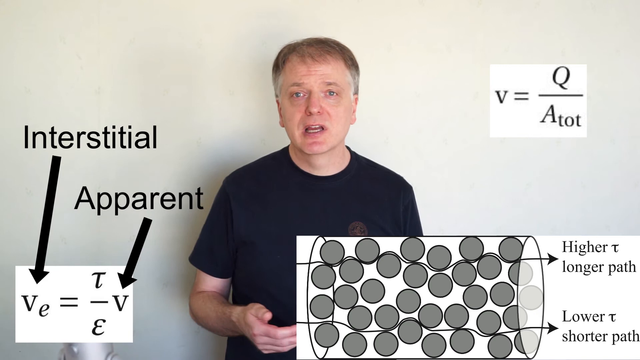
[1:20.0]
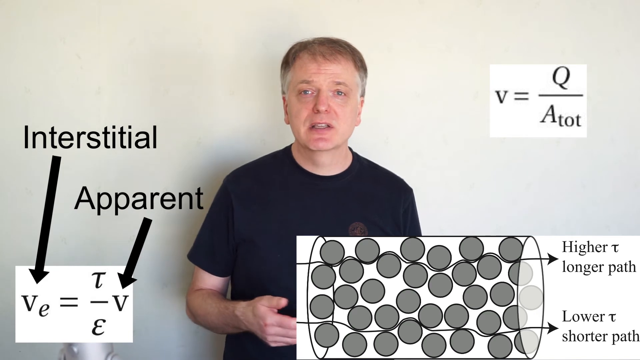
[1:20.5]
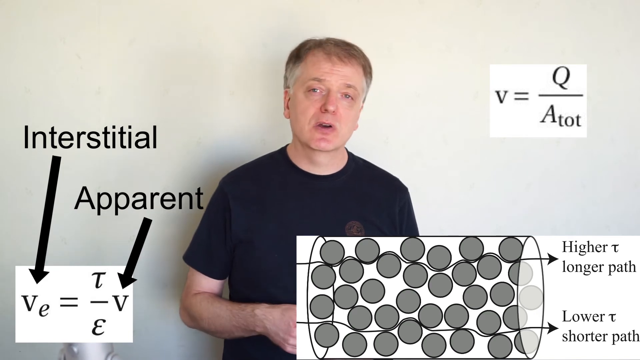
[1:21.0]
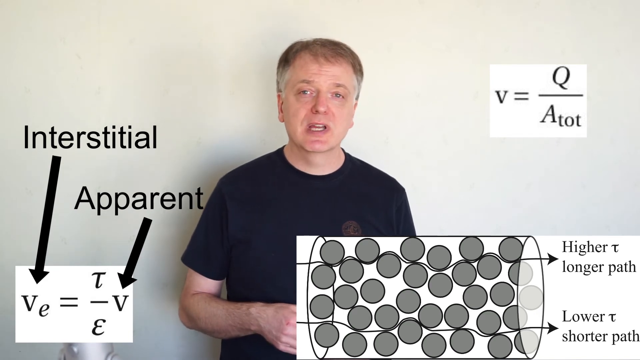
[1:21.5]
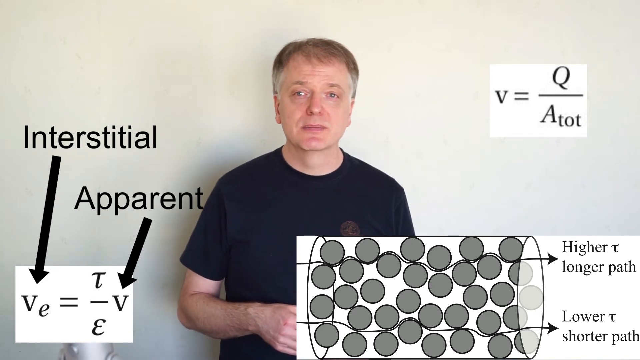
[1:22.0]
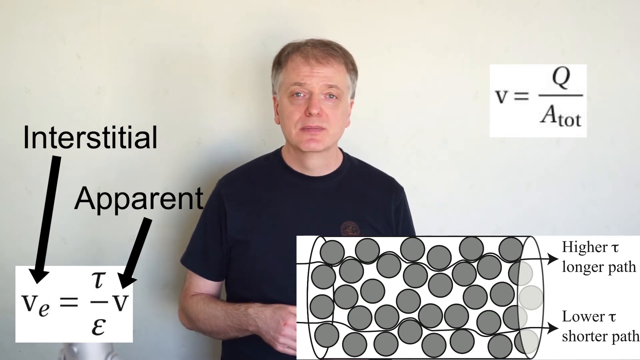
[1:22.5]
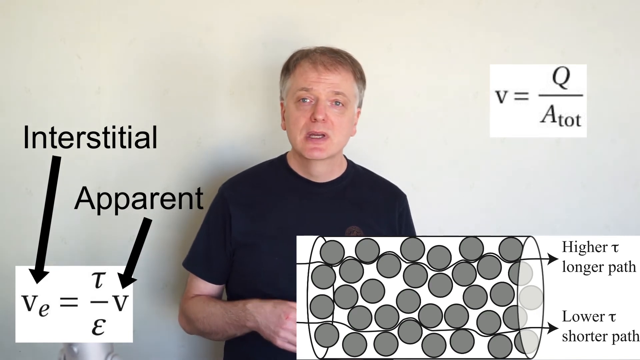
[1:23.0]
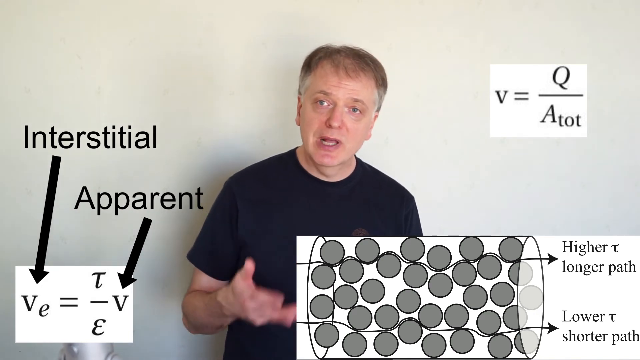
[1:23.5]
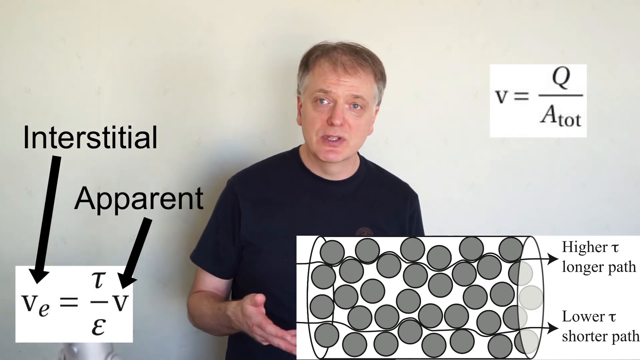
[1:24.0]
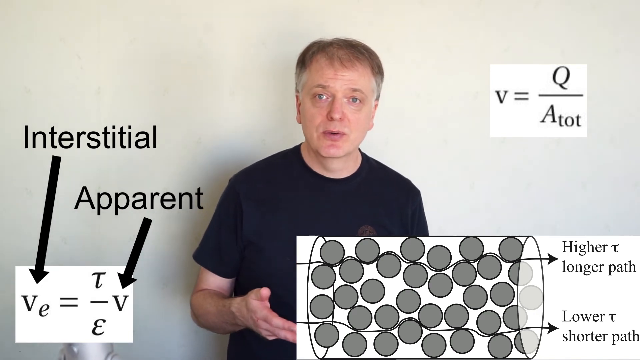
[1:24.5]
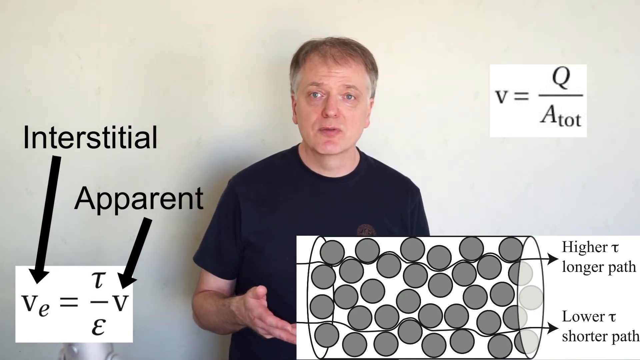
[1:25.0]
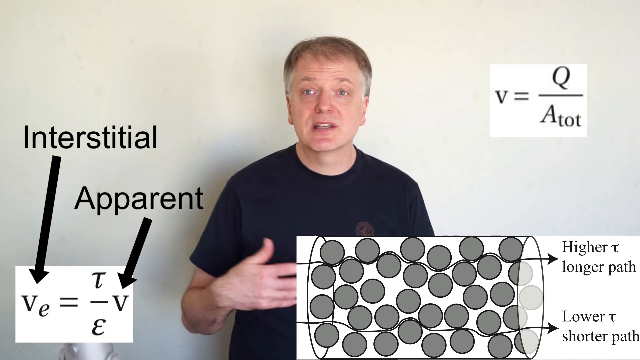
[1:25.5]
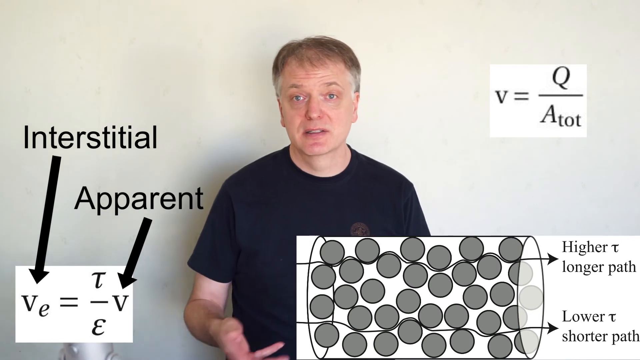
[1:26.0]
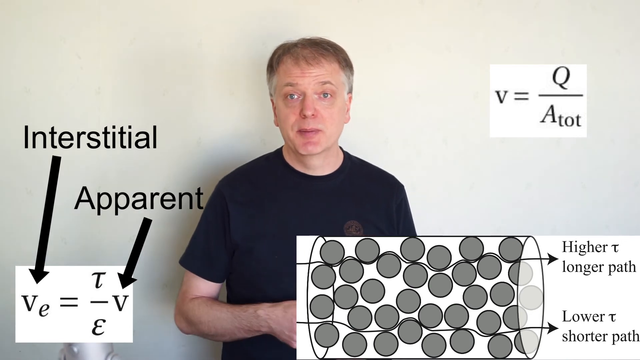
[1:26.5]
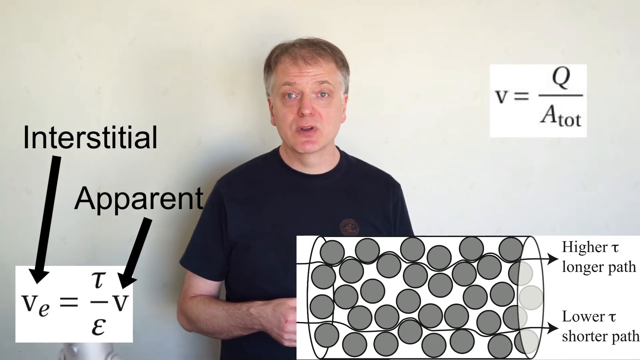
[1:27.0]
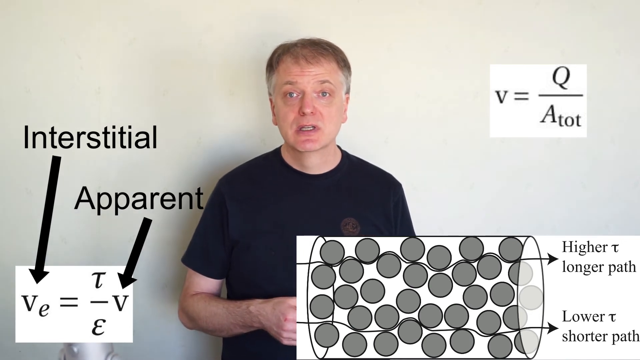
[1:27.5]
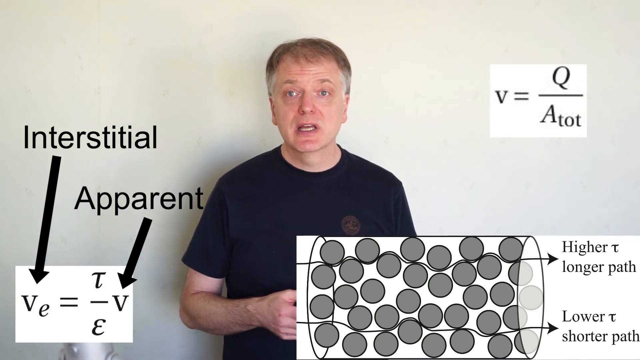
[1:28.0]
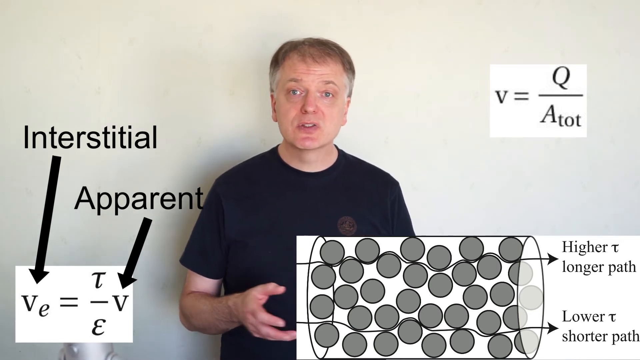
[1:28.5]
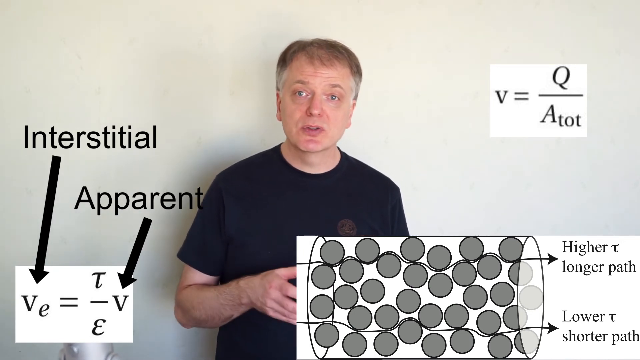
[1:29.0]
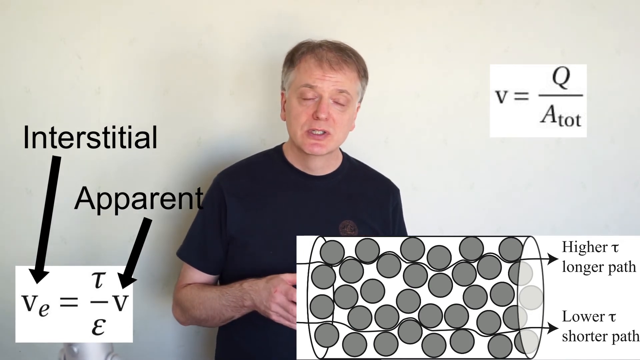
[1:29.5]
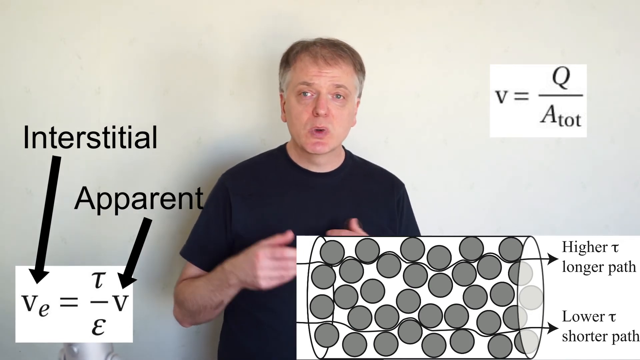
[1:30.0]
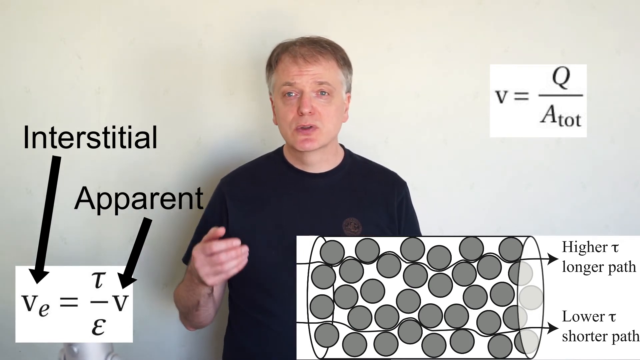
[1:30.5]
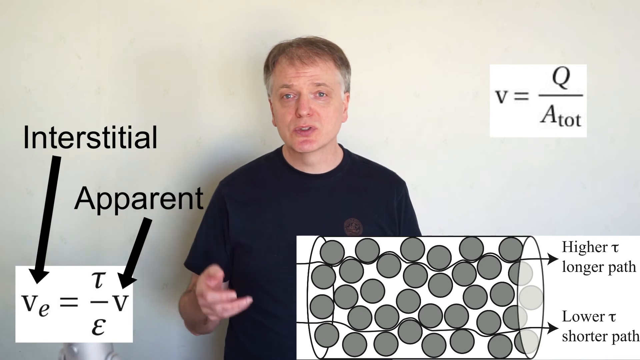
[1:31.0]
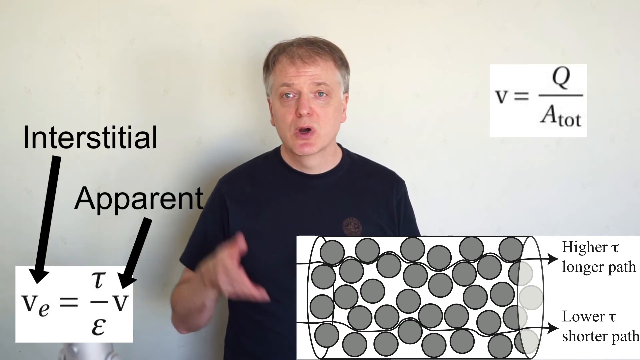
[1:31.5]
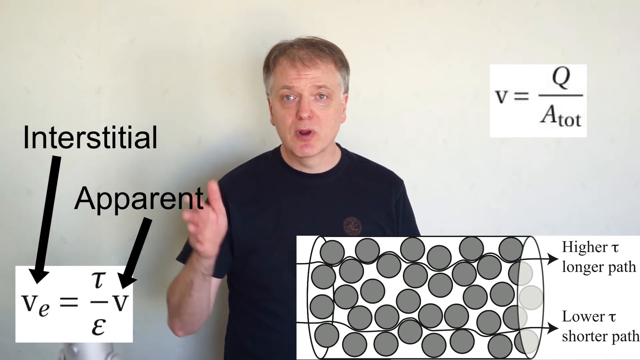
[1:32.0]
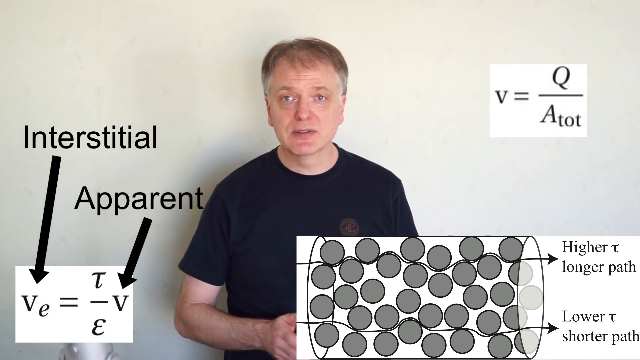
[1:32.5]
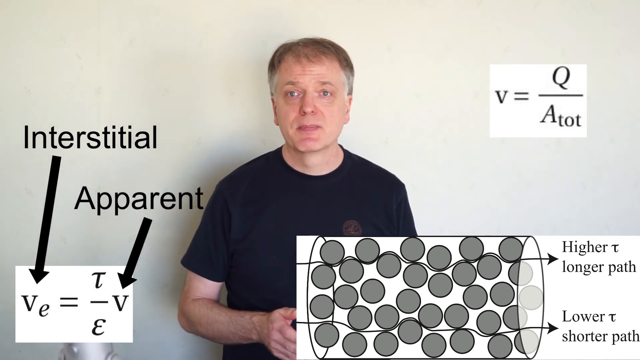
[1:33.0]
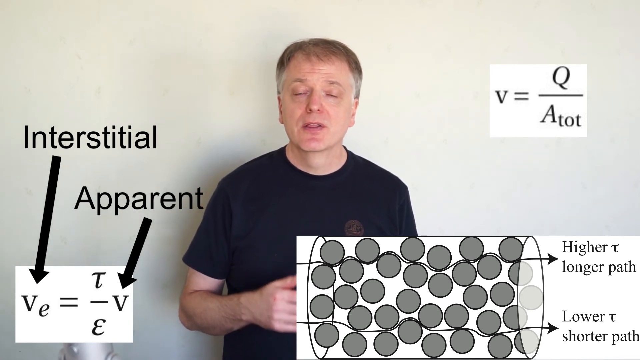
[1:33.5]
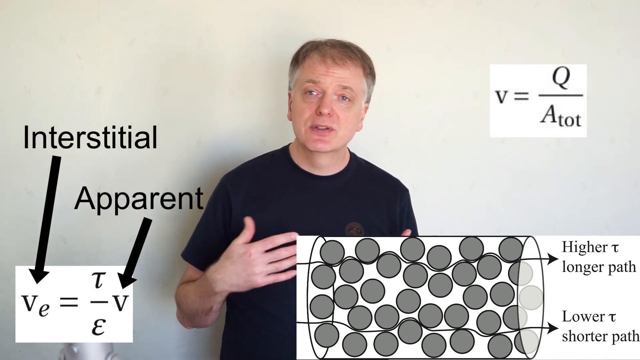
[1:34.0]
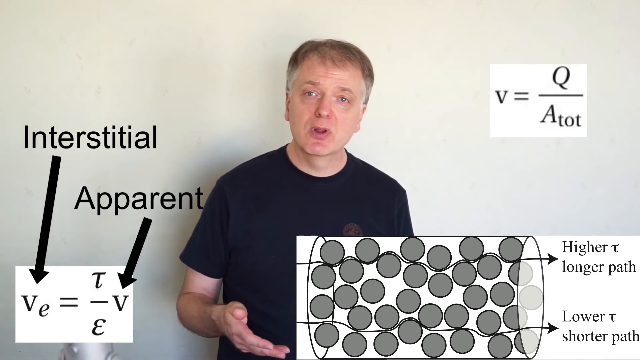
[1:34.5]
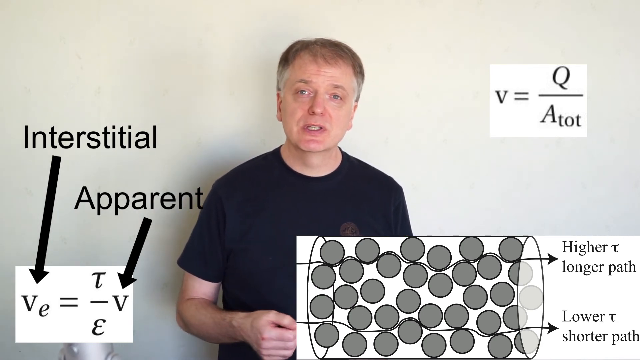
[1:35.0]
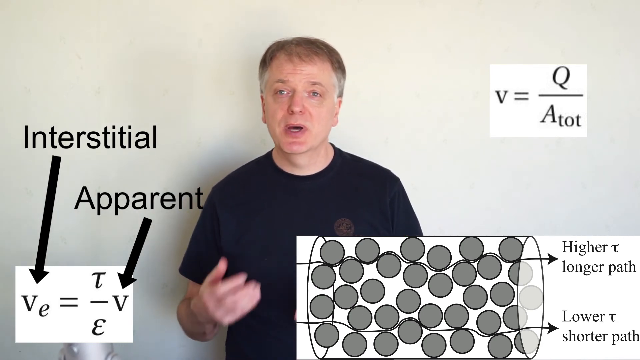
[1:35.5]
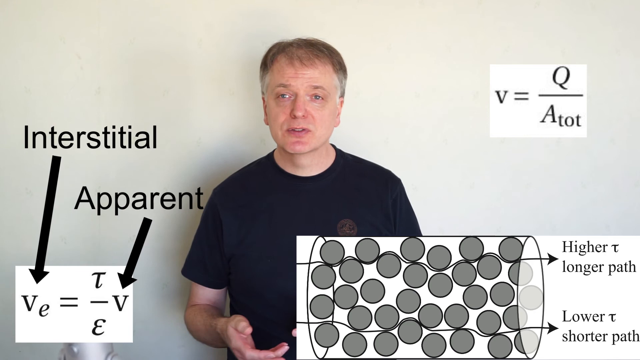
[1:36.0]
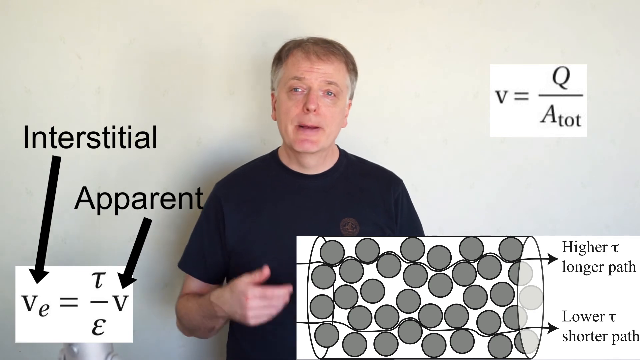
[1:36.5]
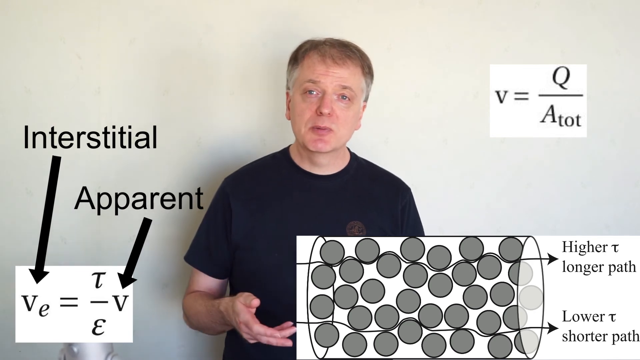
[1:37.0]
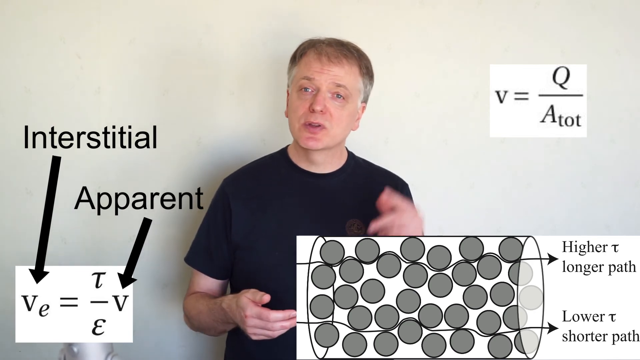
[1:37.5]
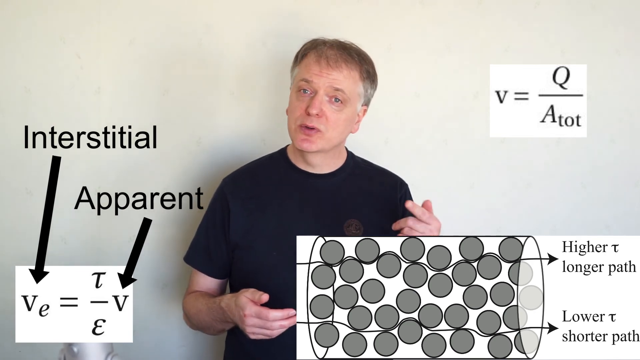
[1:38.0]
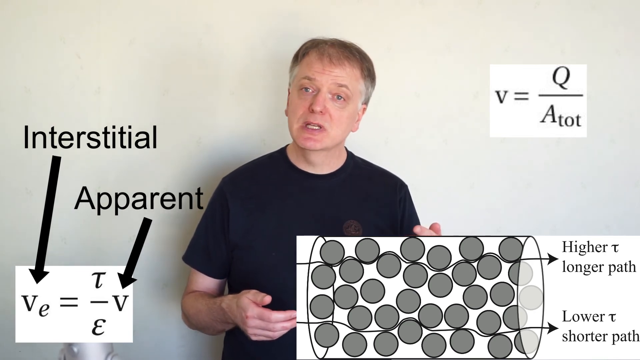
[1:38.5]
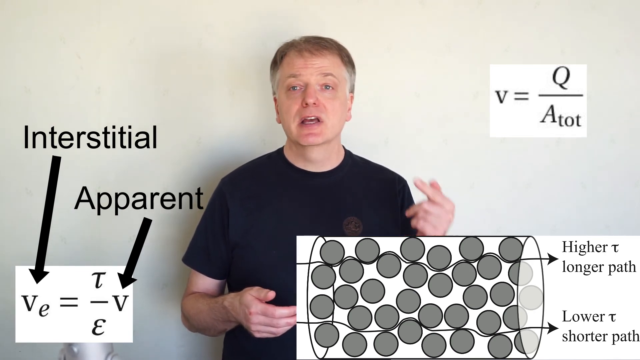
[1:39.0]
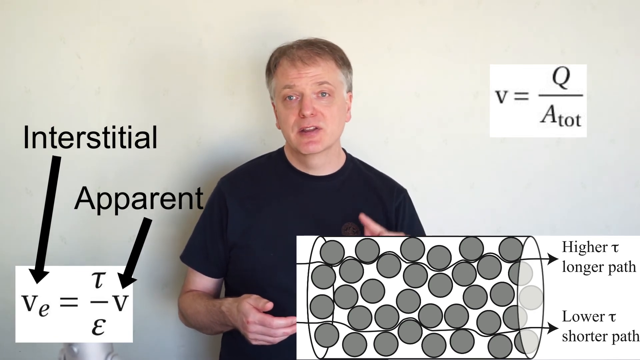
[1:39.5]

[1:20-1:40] A man stands in front of a white wall, surrounded by what look like math problems, or possibly chemistry or physics problems, edited in near him. He talks and kind of moves his hand forward, then forward again, kind of gesturing slightly as he talks, then kind of shakes his hand and wobbles it a little before moving it forward again. The words next to him read "interstitial" and "apparent", part of the math problem at the bottom, where VE is labeled "interstitial" and a plain V is labeled "apparent". The problem reads VE equals T over E and then a V.